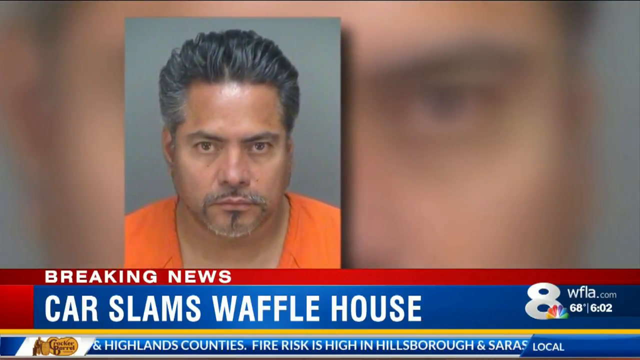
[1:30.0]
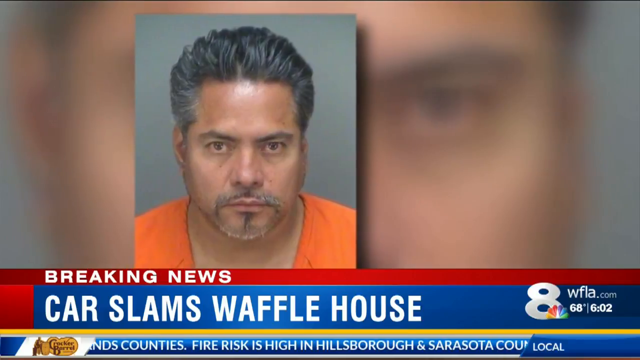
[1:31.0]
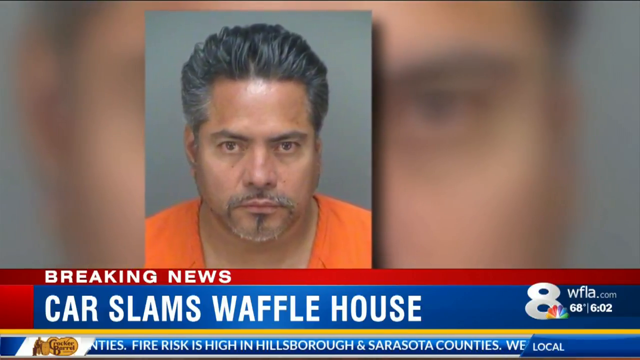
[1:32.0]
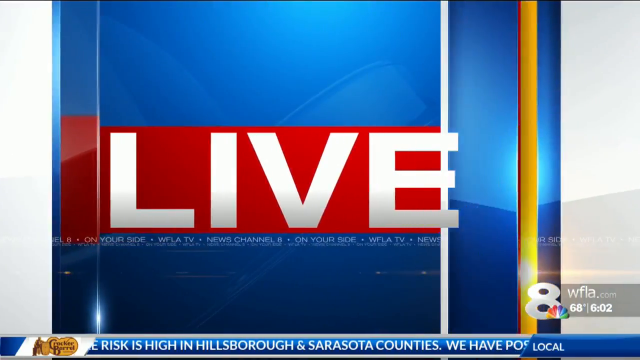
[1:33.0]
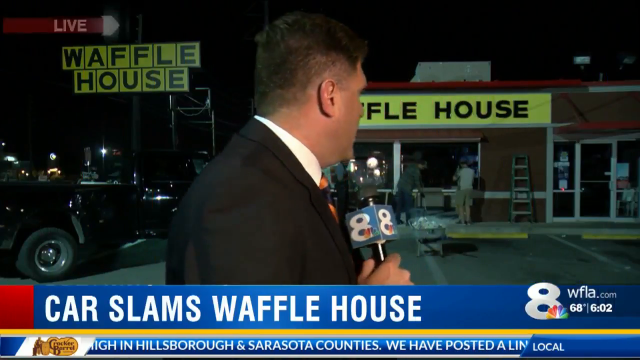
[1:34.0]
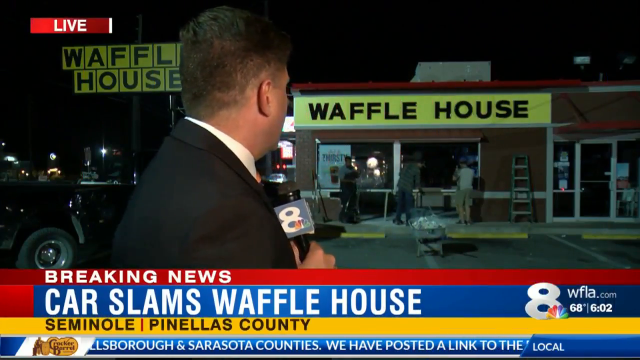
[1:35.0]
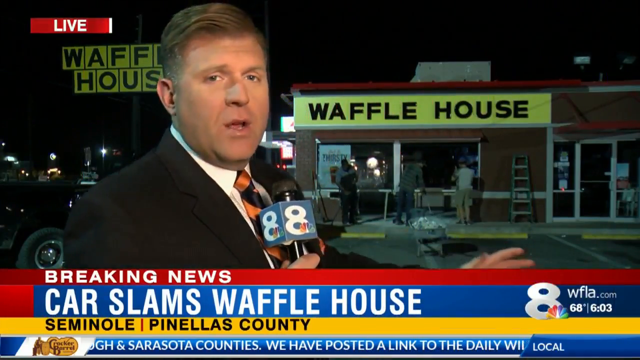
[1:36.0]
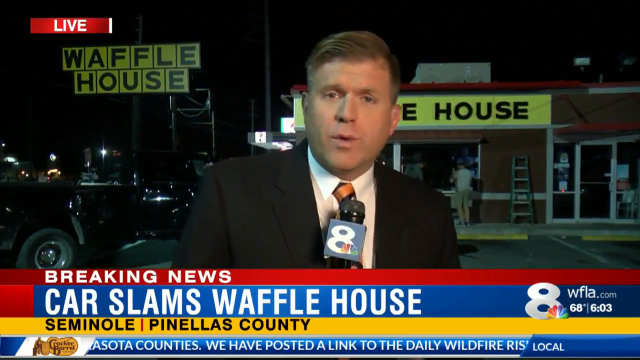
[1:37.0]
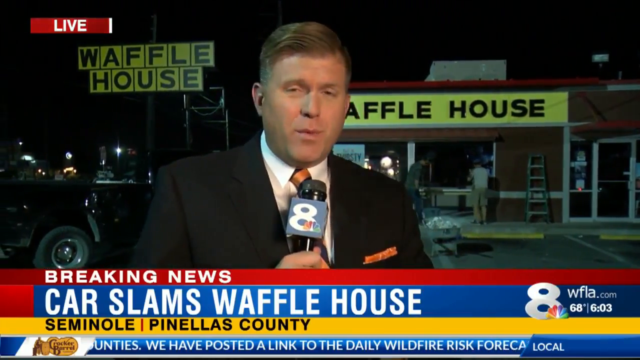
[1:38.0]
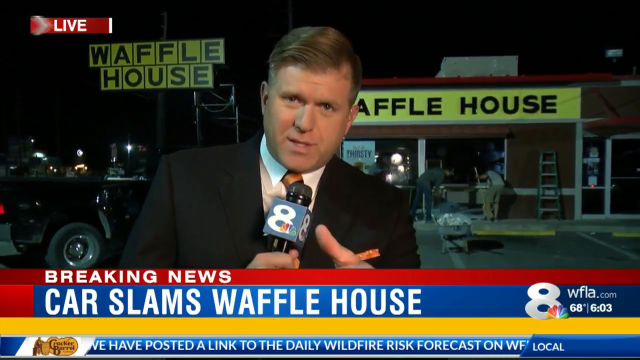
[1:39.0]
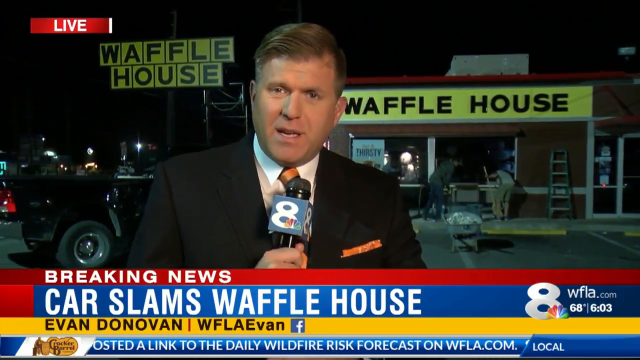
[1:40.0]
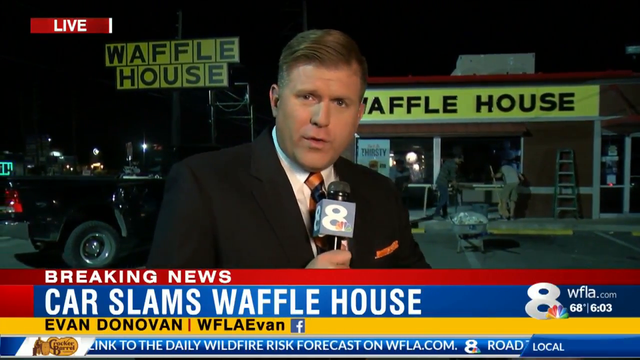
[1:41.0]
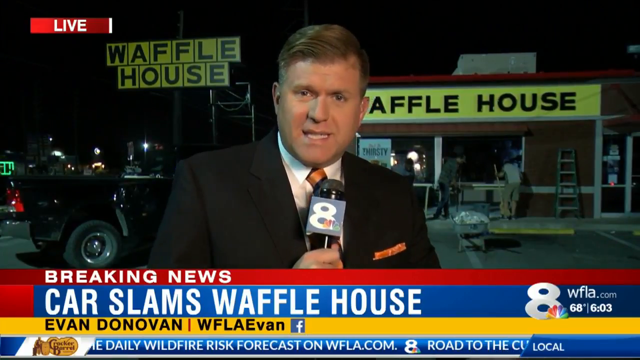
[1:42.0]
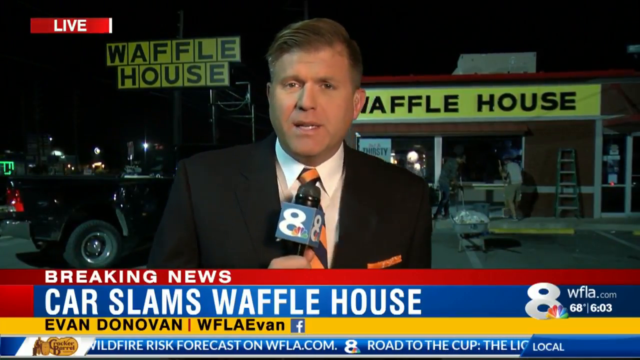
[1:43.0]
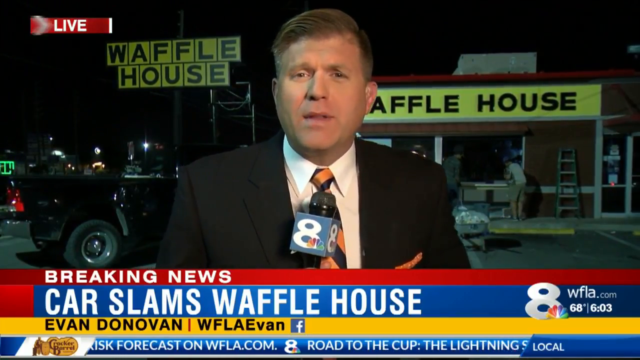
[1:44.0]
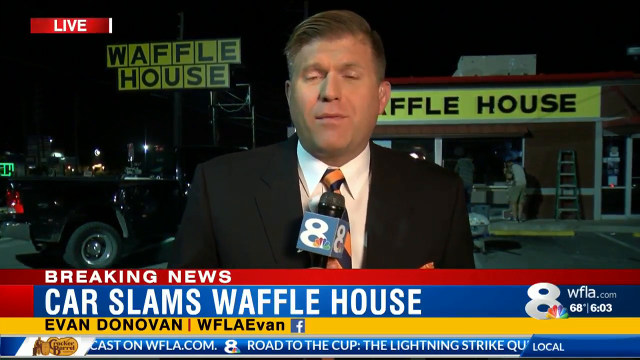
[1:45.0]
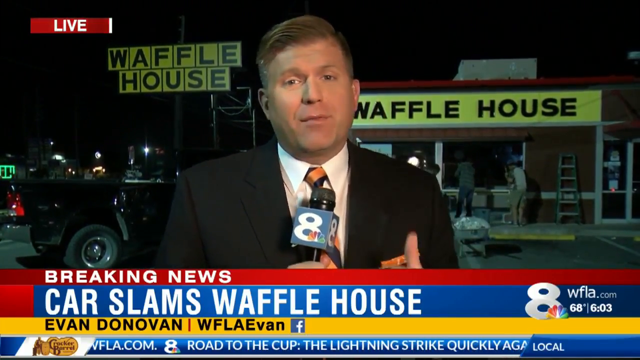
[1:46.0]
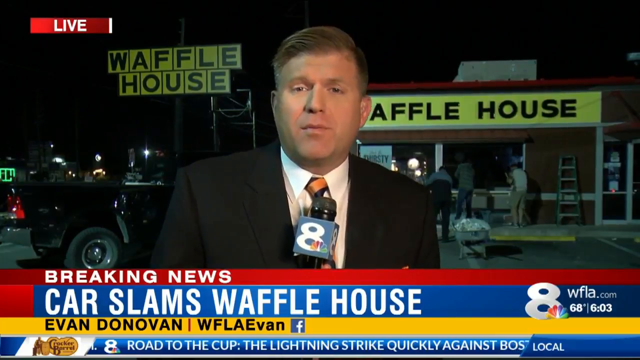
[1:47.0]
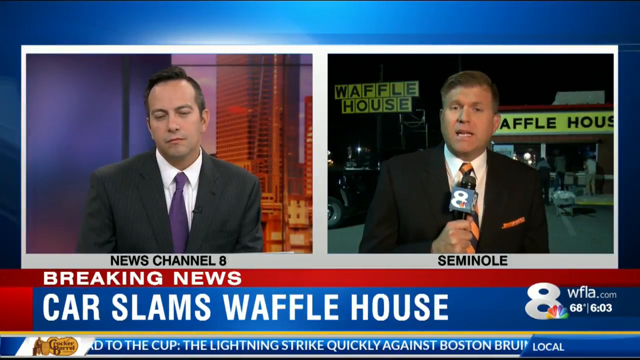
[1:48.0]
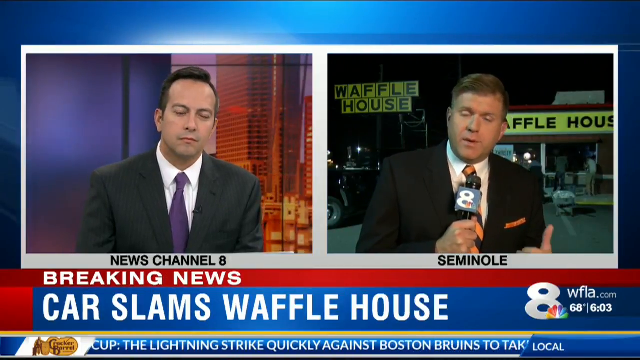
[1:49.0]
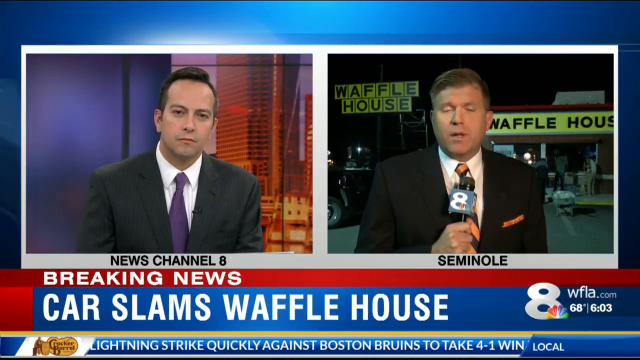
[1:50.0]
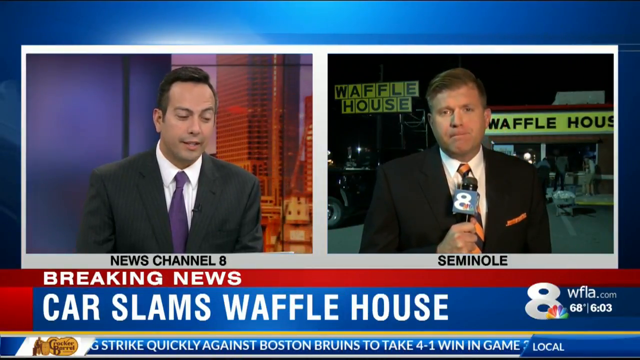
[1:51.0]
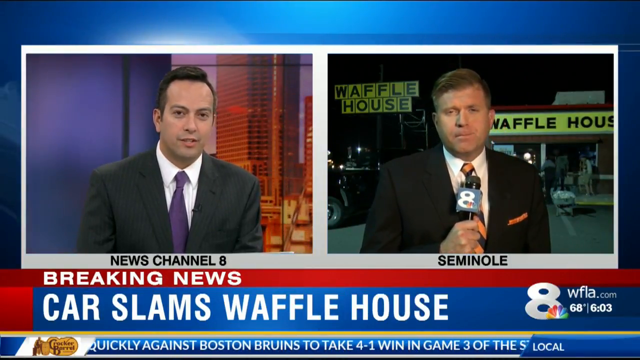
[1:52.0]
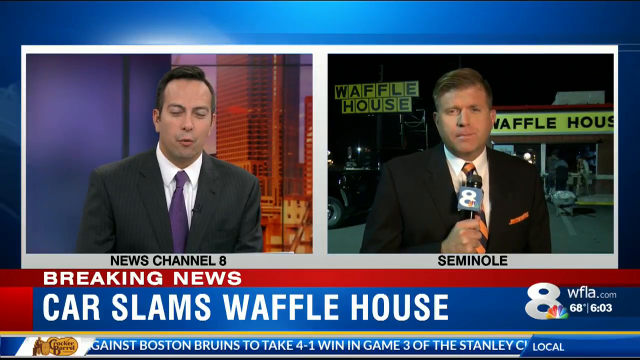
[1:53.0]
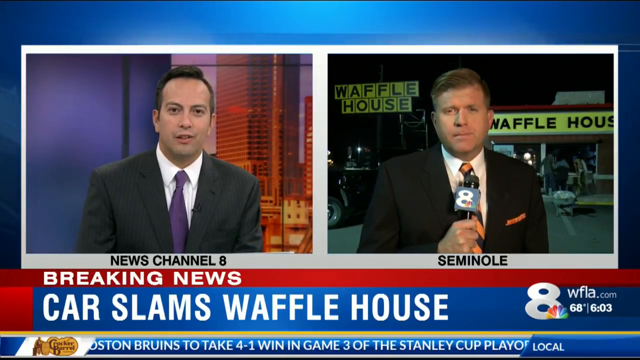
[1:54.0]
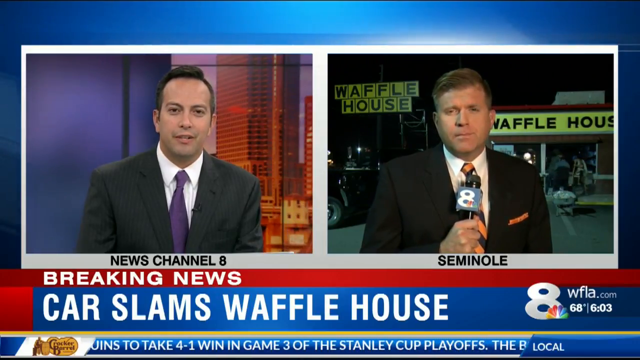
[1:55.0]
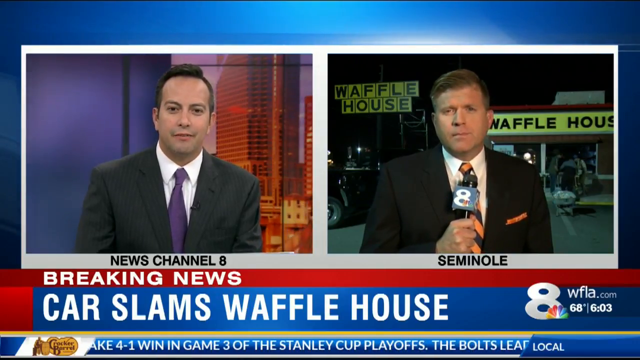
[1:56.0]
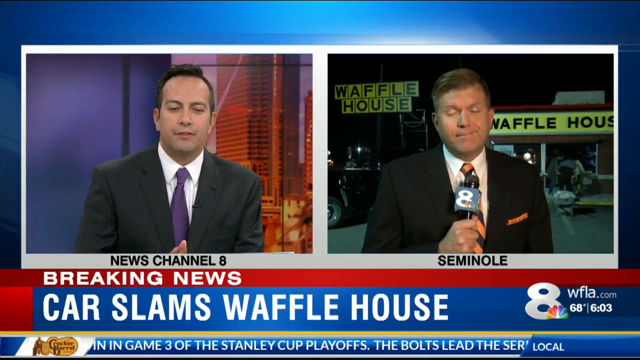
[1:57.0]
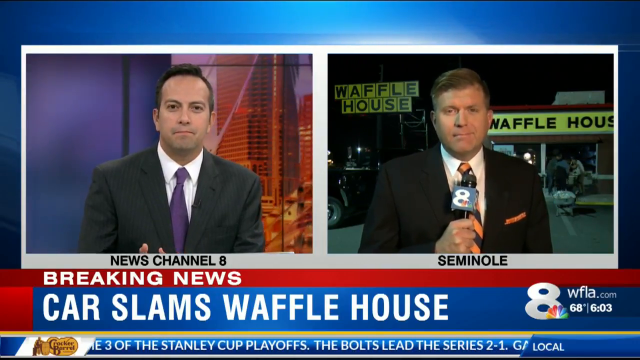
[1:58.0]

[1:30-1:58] The suspect's picture appears again. Shortly after, Evan Donovan, who is in Seminole, talks with the News Channel 8 news reporter, and they seem to be exchanging questions and answers about the situation at the Waffle House. People are still cleaning the Waffle House, carrying brooms and other cleaning materials. The suspect looks angry and not apologetic.